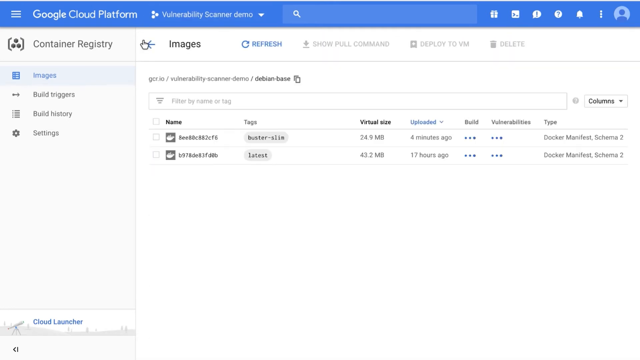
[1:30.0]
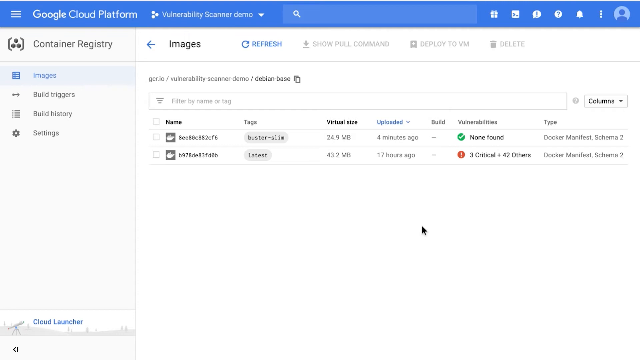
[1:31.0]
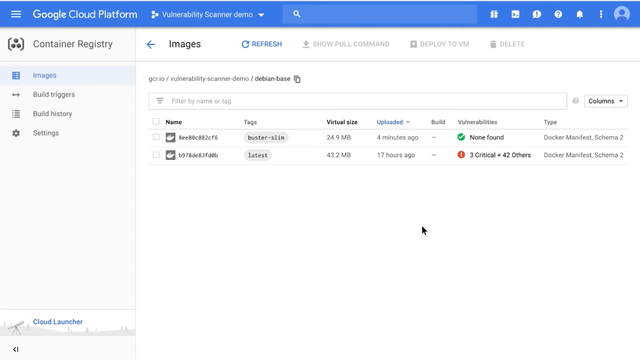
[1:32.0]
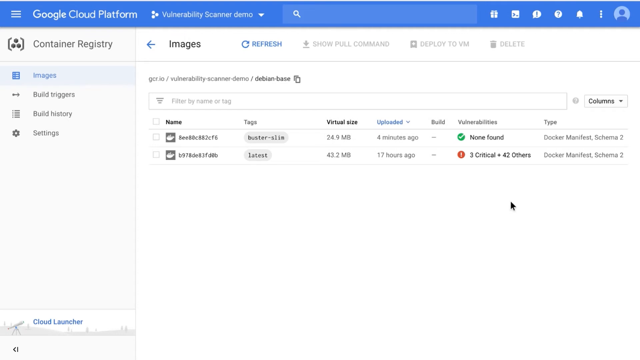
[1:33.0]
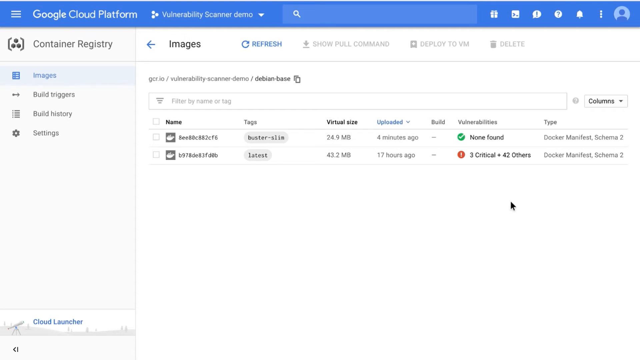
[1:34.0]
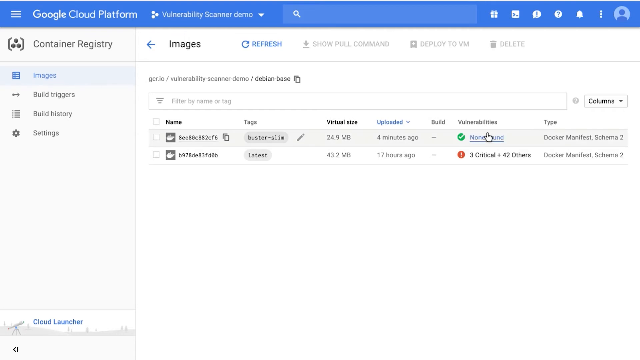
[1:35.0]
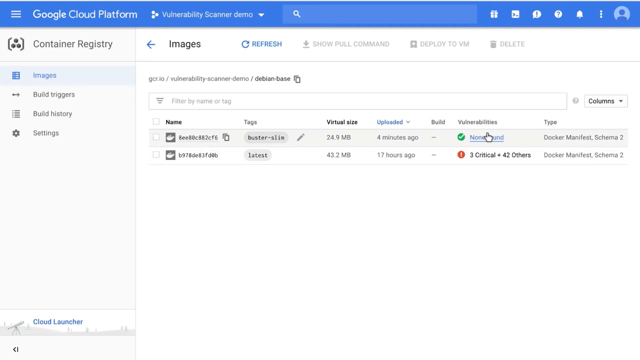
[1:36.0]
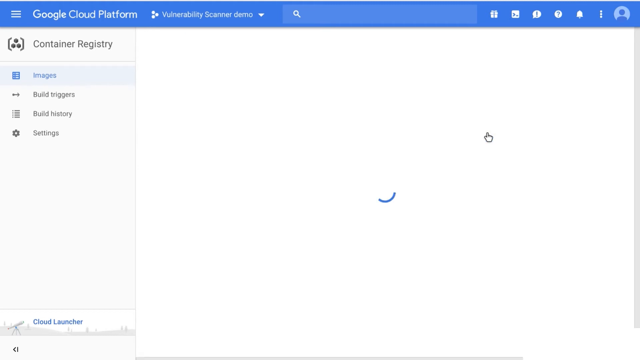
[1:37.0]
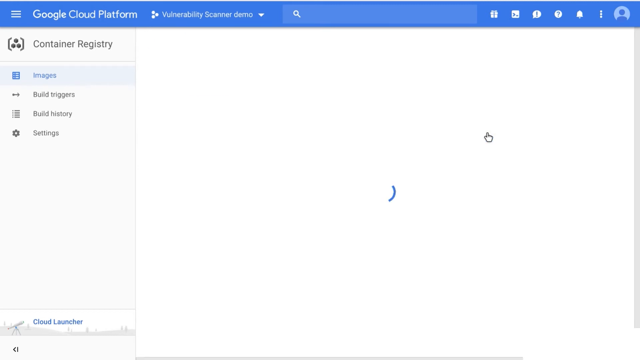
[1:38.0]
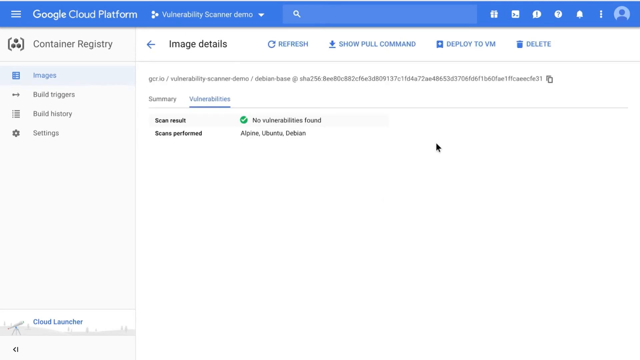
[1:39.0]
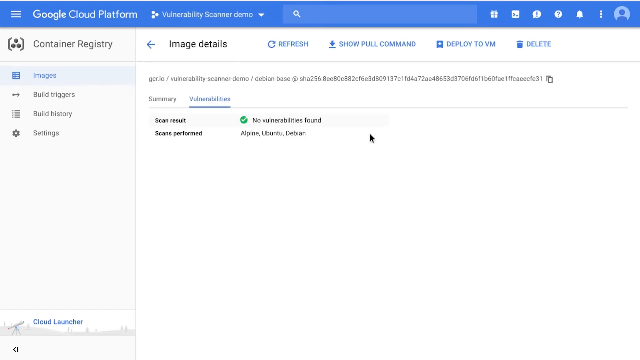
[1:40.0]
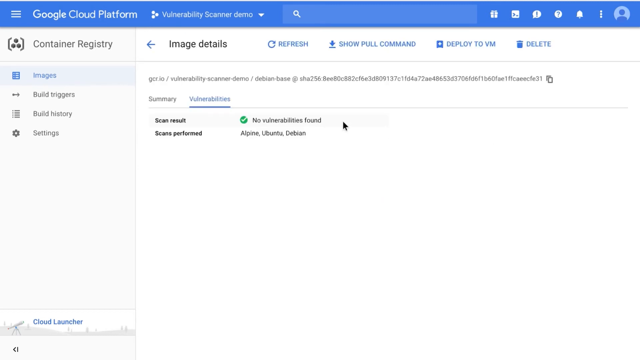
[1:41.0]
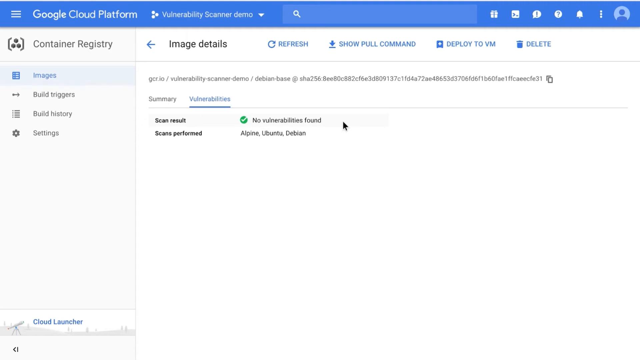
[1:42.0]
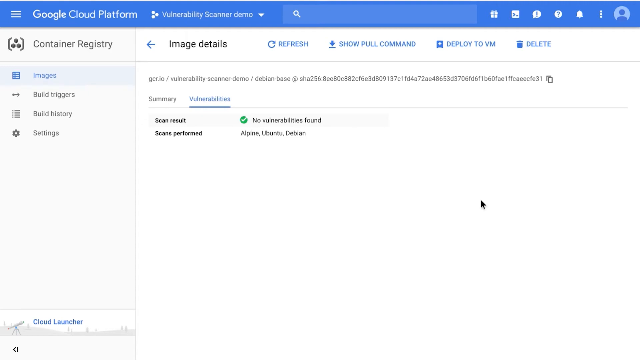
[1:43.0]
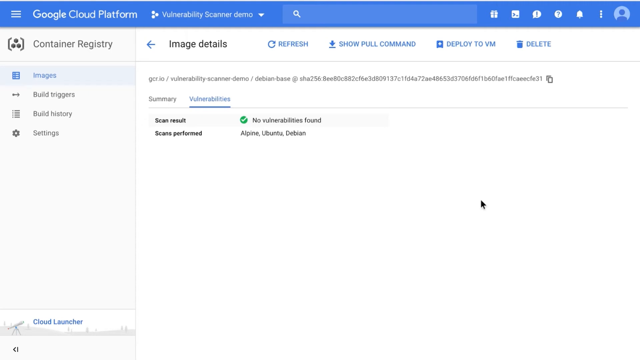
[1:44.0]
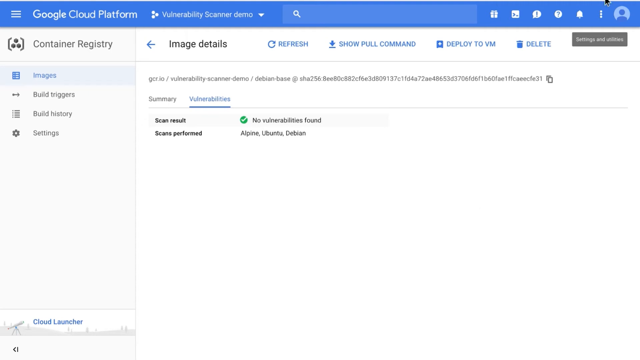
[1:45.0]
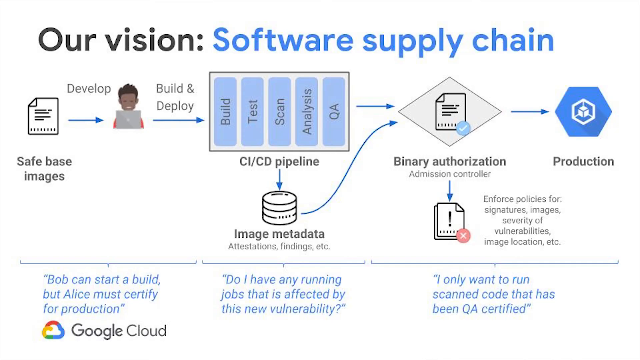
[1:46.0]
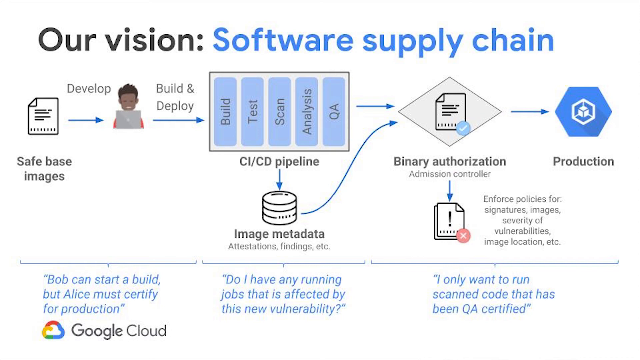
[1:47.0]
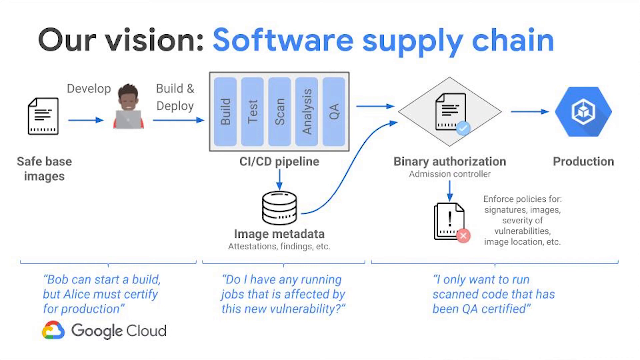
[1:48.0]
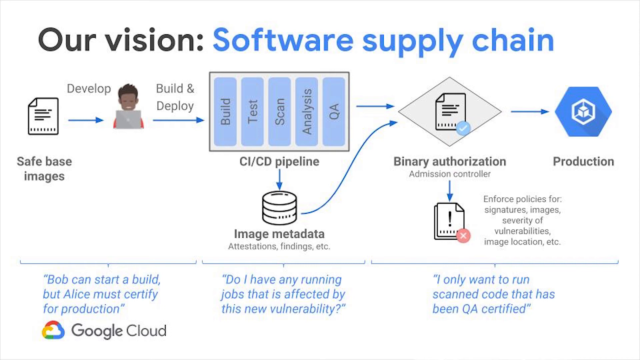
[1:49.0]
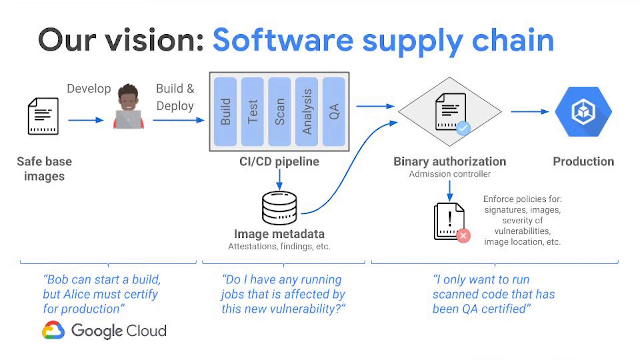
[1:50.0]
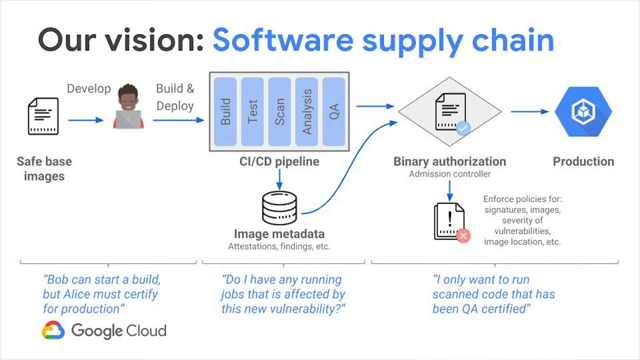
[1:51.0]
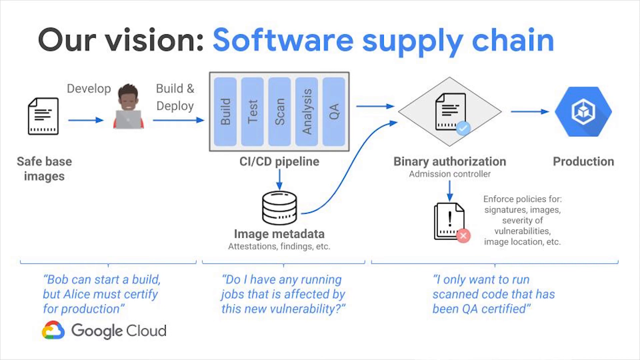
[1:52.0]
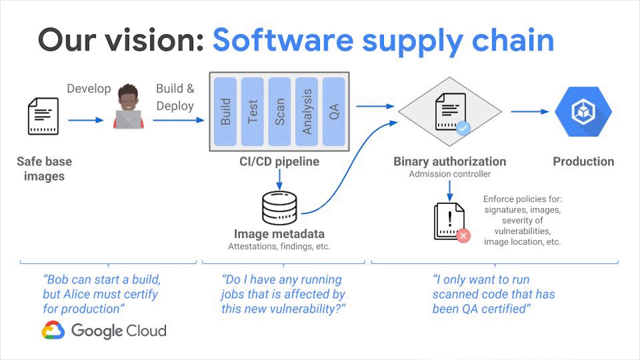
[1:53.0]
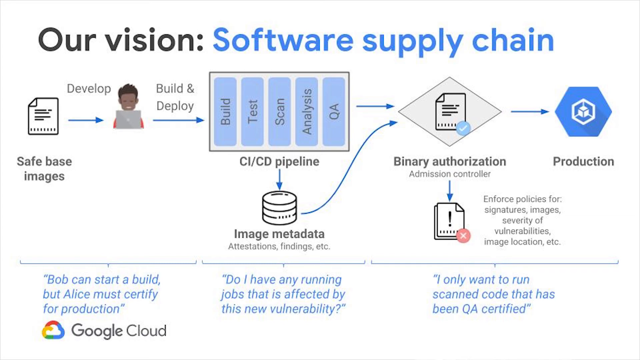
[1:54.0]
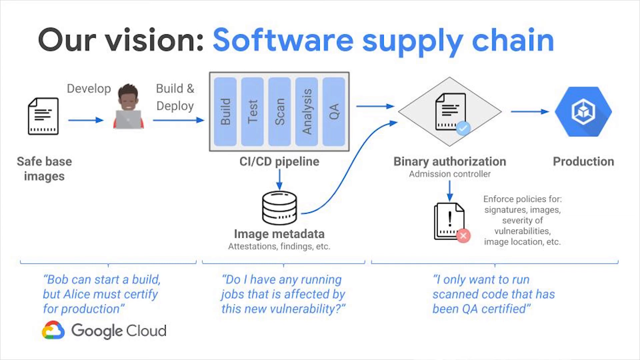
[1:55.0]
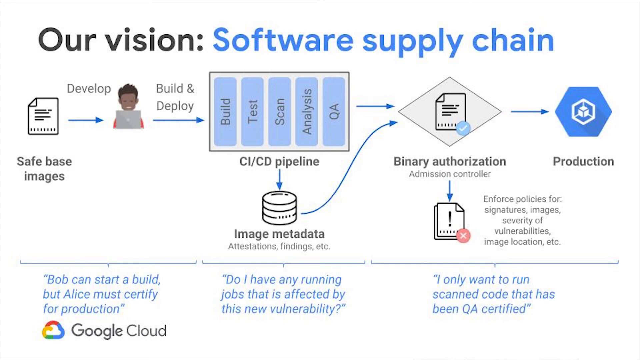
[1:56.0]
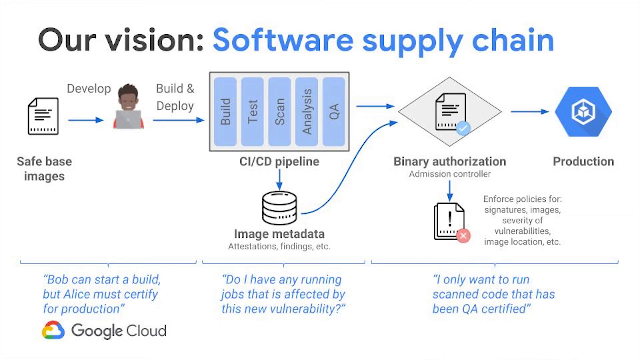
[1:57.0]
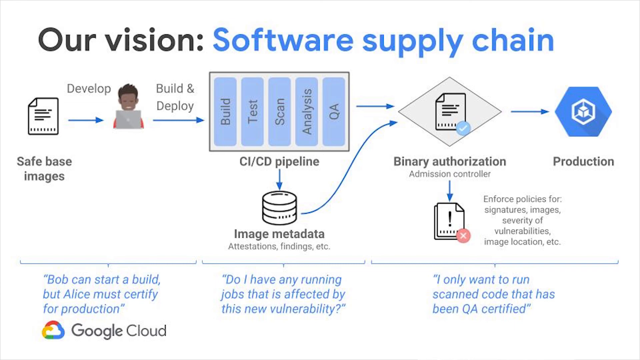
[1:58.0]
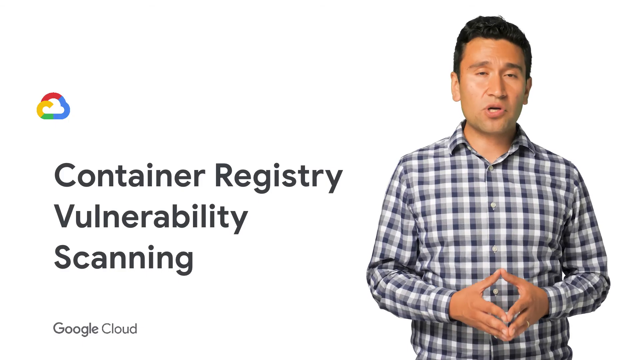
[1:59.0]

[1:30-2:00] A screenshot of a website has a blue bar along the top with white writing; from left to right there is a drop-down menu, "Google Cloud Platform," a logo of three dots in a triangle shape labeled "Vulnerability Scanner Demo" as a drop-down menu, and a search bar with a white magnifying glass. On the right side are some small logos: one looks like a gift box, one is a speech bubble with an exclamation mark, one is a circle with a question mark, and one is a bell. Below, the screen is white with mostly black text. The left side reads "Container Registry," with tabs underneath reading "Images" in blue and "Build Triggers," "Build History" and "Settings" in black. To the right are "Images," a blue refresh button, and gray "Show Full Command," "Deploy to VM" and "Delete." Underneath, text reads "Vulnerability Scanner Demo" with some files below. A hand-shaped cursor is on a blue arrow just to the left of the "Images" text. The view sort of goes through the files, showing that no vulnerabilities are found on one file; Alpine, Ubuntu and Debian scans are performed. Then a page reads in black "Our Vision Software Supply Chain," with "Software Supply Chain" in blue. A sort of flow chart on a white background follows, reading "Safe Base Images," "Develop," then a picture of a person, "Build and Deploy," and "Build, Test, Scan, Analysis, Q&A, CI, CD, Pipeline," which goes down to "Image Metadata, Attestations, Findings, etc." This flows to the right and is labeled "Binary Authorization Admission Controller." An arrow pointing down from it to an exclamation mark reads "Enforce Policies for Signatures, Images, Severity of Vulnerabilities, Image Location, etc." Finally, Binary Authorization flows to an image labeled "Production." Underneath, blue text reads "Bob can start a build, but Alice must certify," "Do I have any running jobs that is affected by this new vulnerability?" and "I only want to run scan code that has been QA certified." A Google Cloud logo is in the bottom left corner.